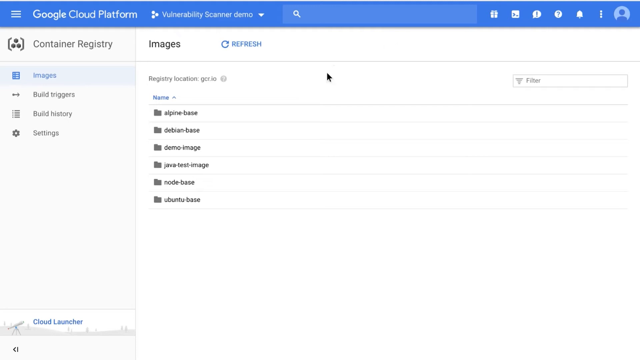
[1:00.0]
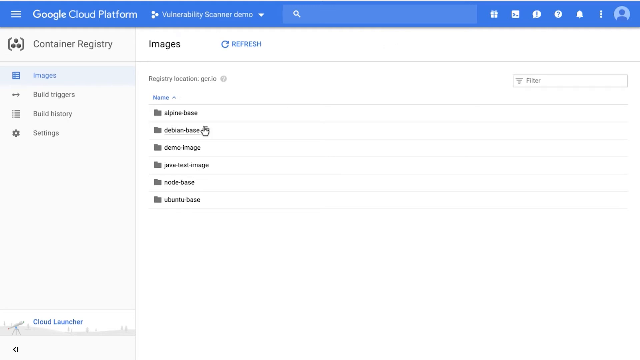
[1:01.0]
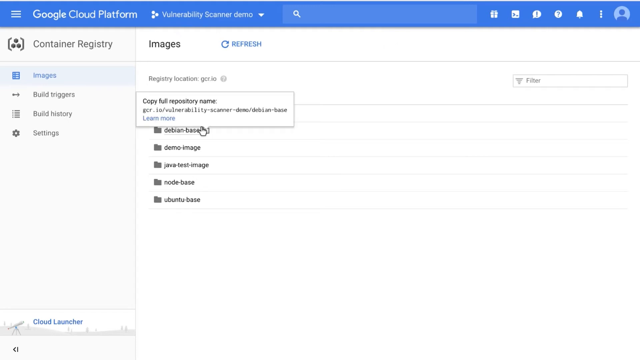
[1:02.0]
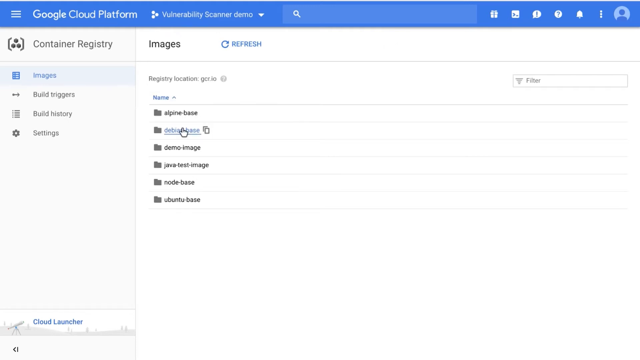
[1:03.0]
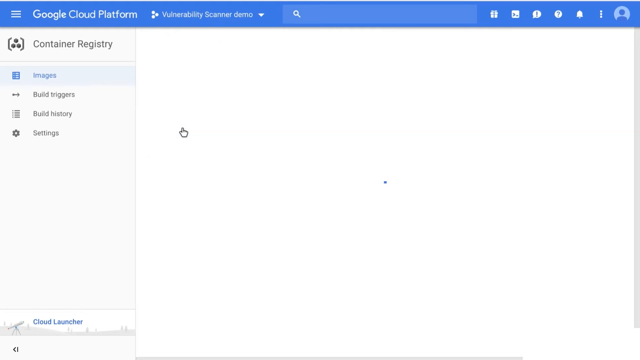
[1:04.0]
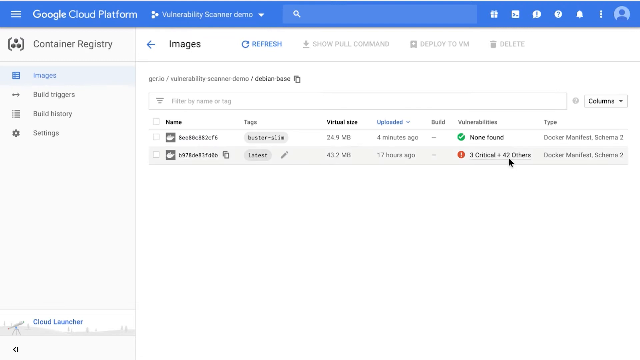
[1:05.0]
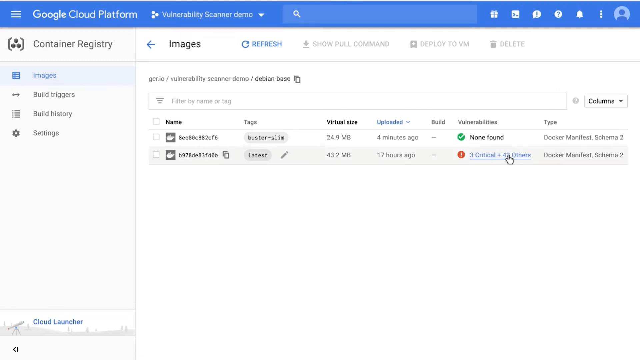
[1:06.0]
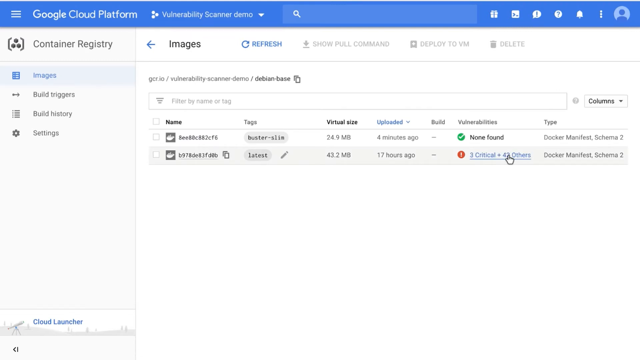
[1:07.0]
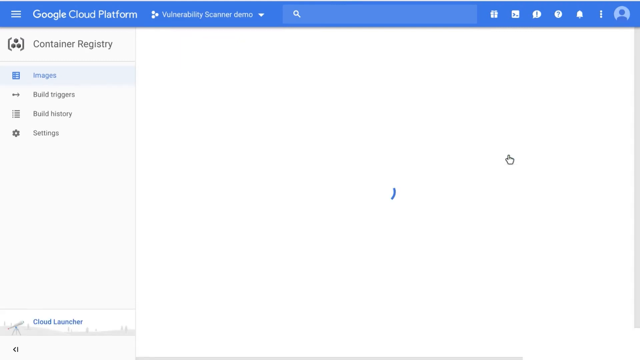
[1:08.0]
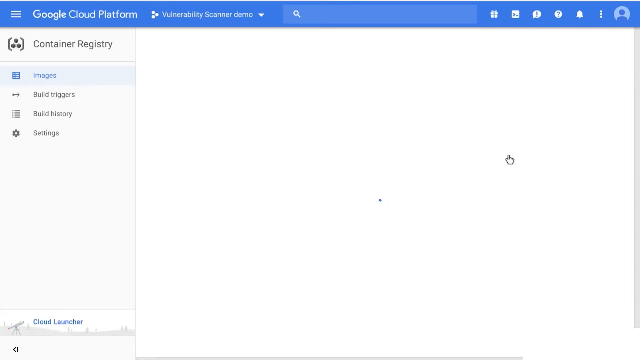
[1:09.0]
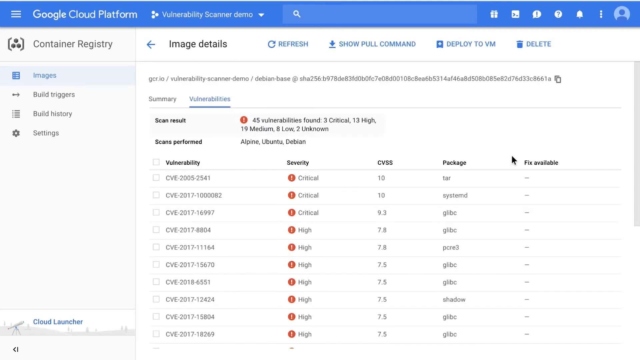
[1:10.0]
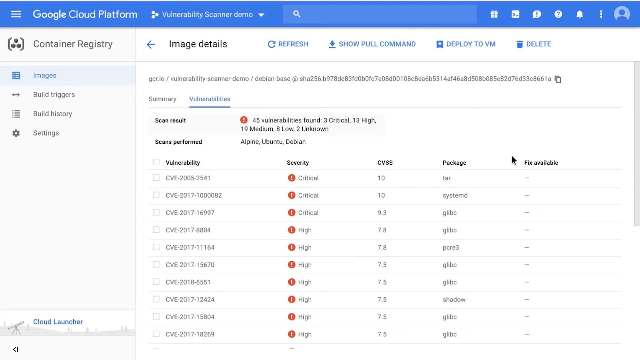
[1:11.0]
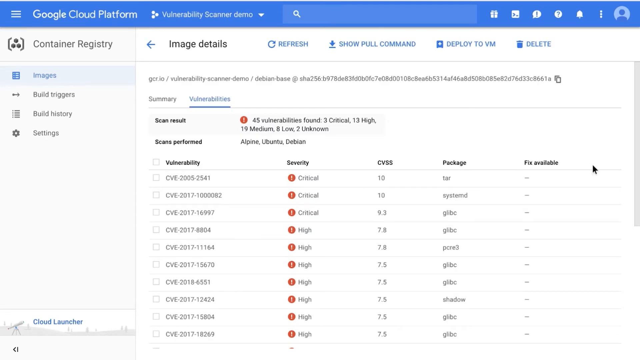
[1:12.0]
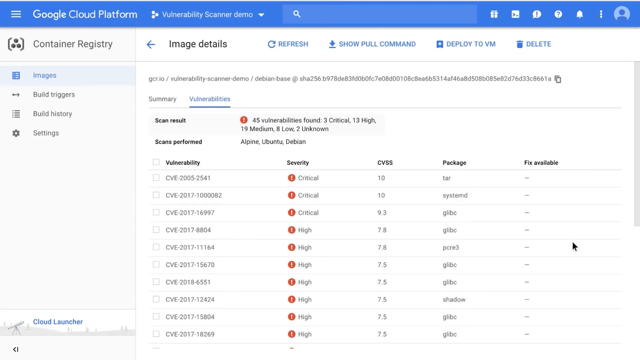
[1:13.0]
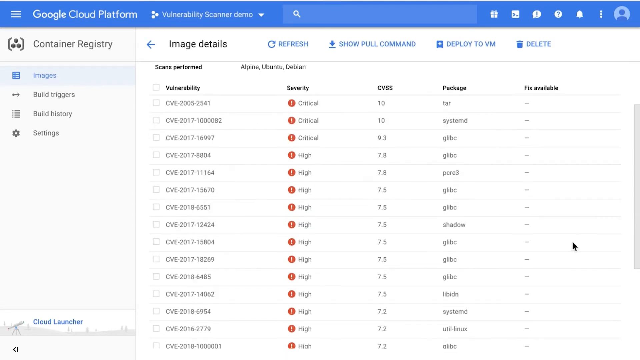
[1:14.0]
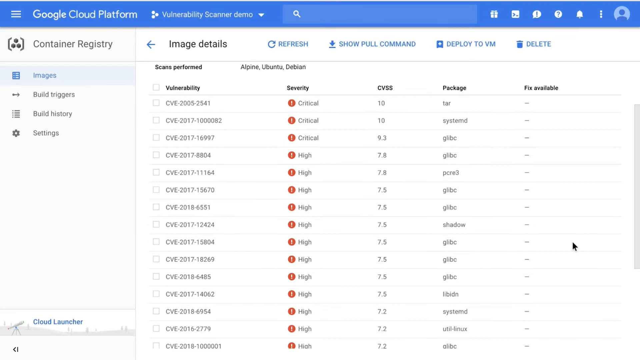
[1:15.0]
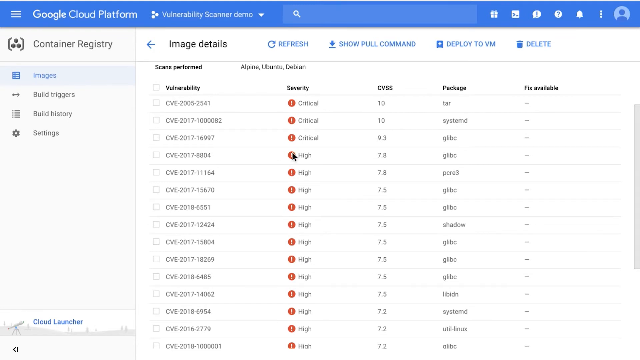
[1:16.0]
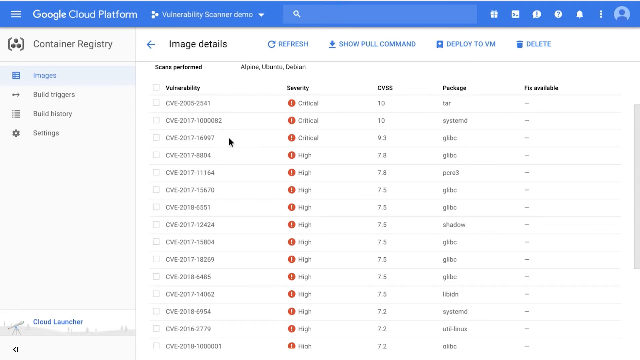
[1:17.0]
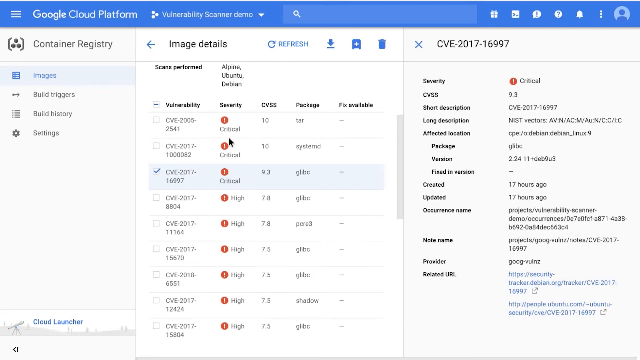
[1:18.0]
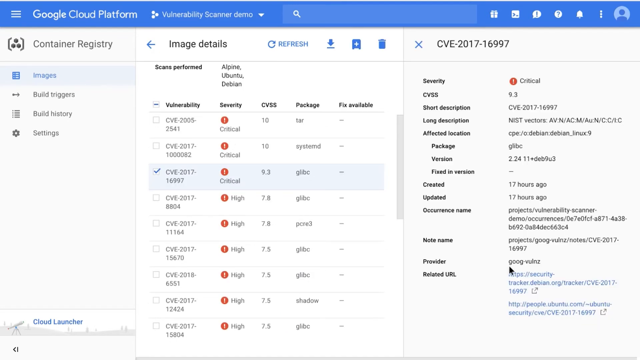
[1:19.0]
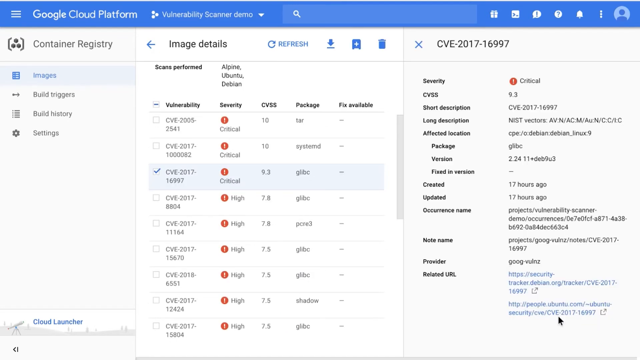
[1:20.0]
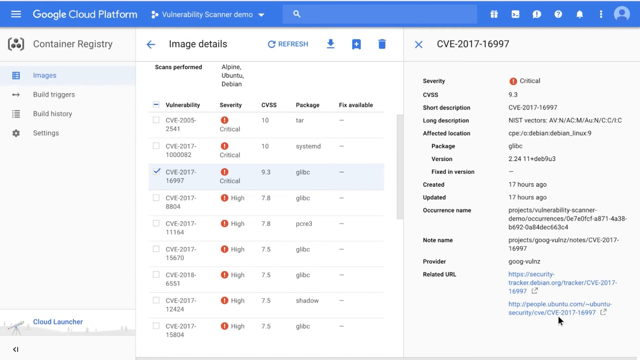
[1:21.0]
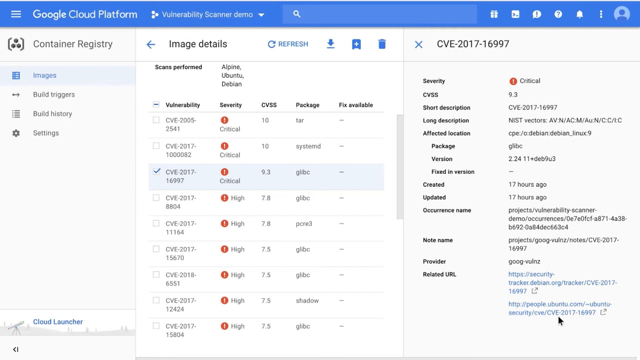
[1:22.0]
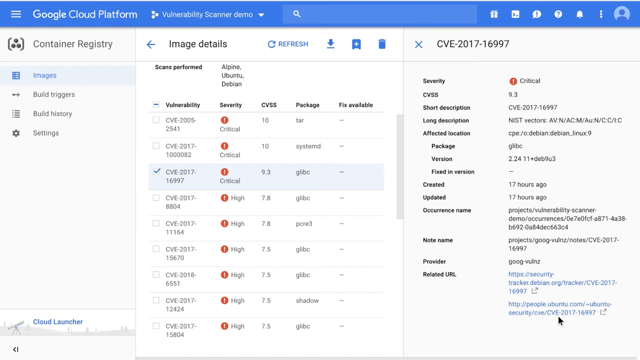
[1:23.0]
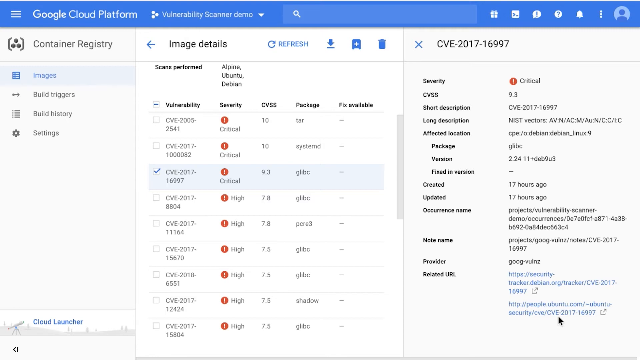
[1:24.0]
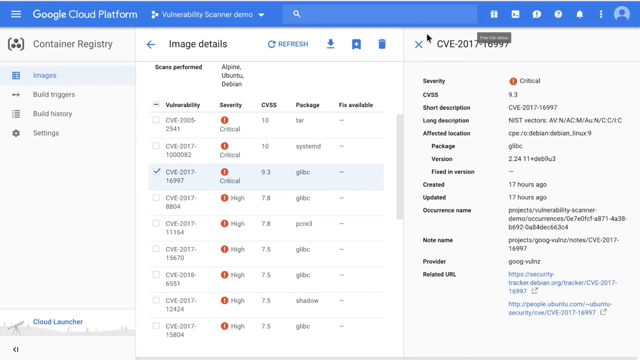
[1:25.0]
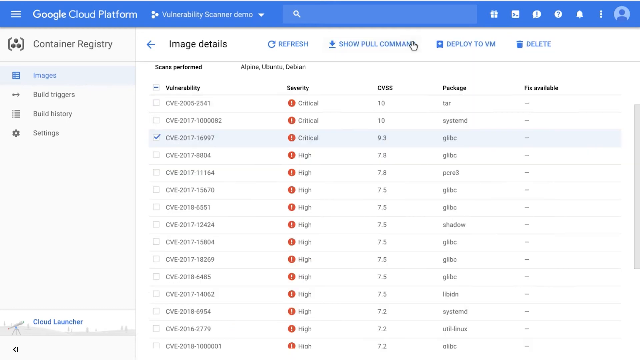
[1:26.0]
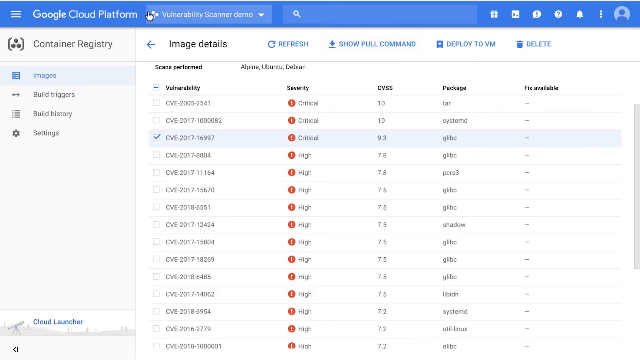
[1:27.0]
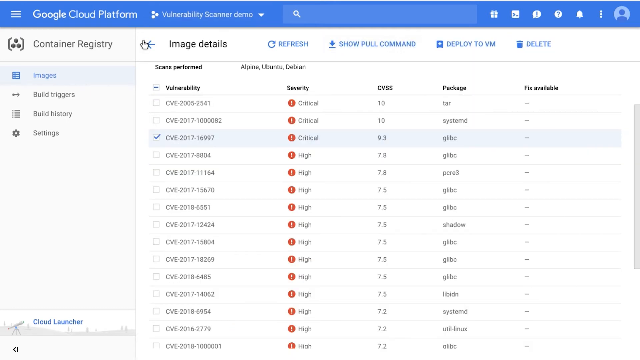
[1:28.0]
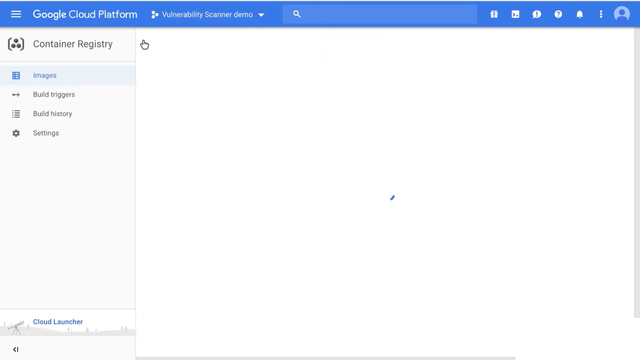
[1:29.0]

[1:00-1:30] A screenshot of a website shows a light blue bar running across the top of the screen. In white, it has a drop-down menu, then "Google Cloud Platform," then a "Vulnerability Scanner Demo" drop-down, a search bar, and some logos, including a bell and a question mark. Below, the page is white. The left side is labeled in black "Container Registry," with a tab for "Images" in blue beneath it, followed in black by "Build Triggers," "Build History" and "Settings." To the right, the page reads "Images" in black and "Refresh" in blue. Underneath are "Registry Location," a drop-down menu labeled "Name" in blue, and files labeled "Alpine Base," "Debian Base," "Demo Image," "Java Test Image," "Node Base" and "Ubuntu Base." A cursor selects the Debian base images and sort of goes through the process. After the page loads, the vulnerabilities found are shown with their severity levels, such as critical and high, marked with a red circle containing a white exclamation mark. One is selected, and then the view goes back to the original page.